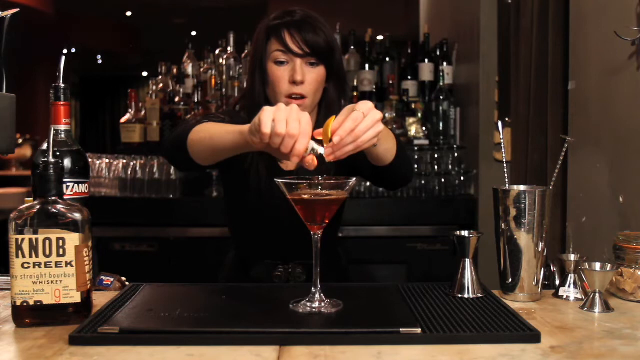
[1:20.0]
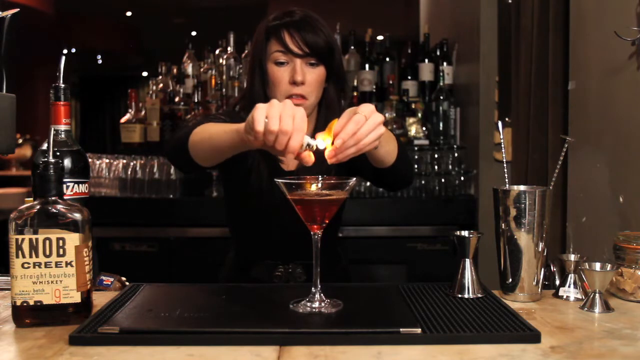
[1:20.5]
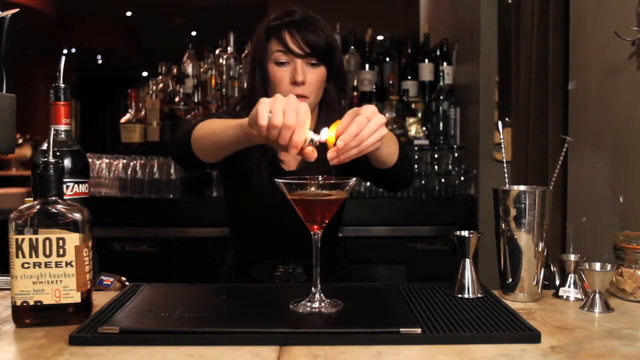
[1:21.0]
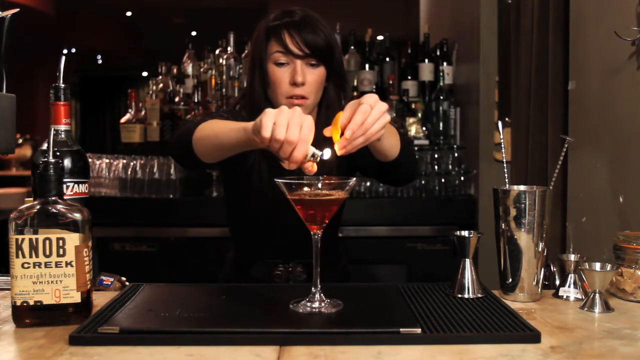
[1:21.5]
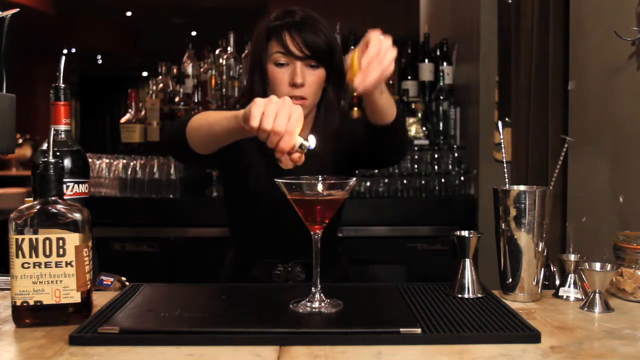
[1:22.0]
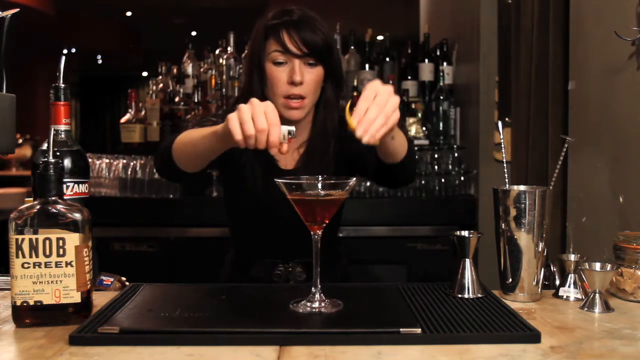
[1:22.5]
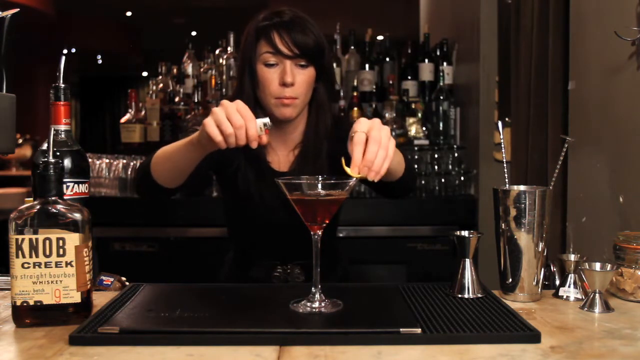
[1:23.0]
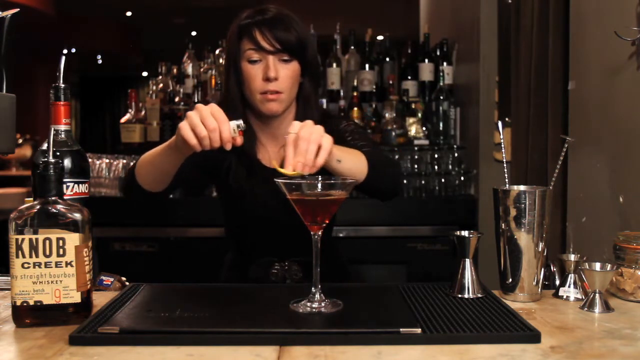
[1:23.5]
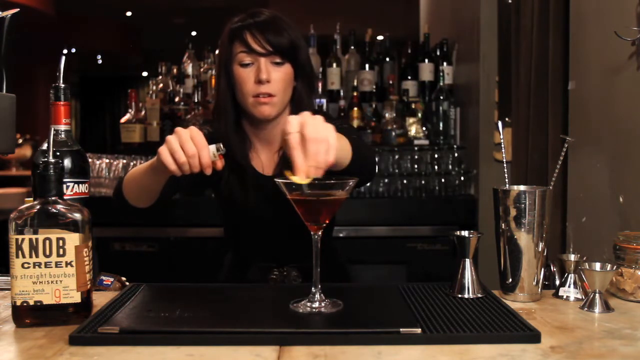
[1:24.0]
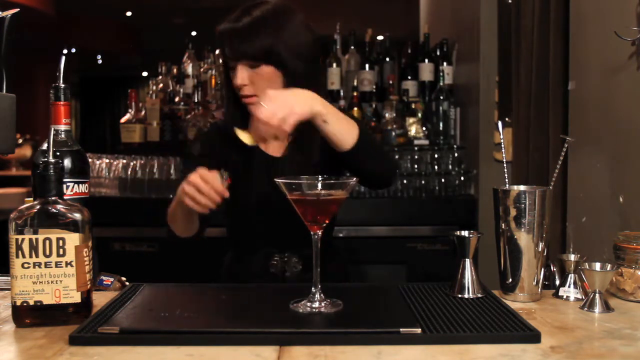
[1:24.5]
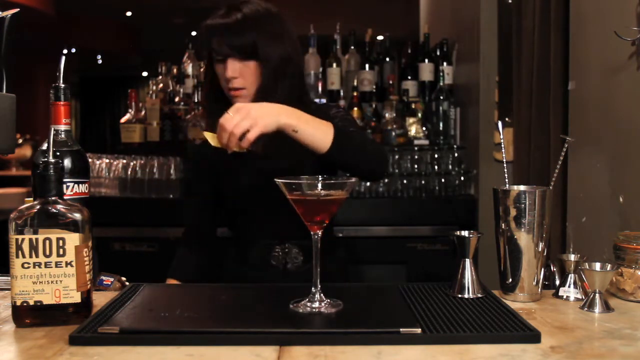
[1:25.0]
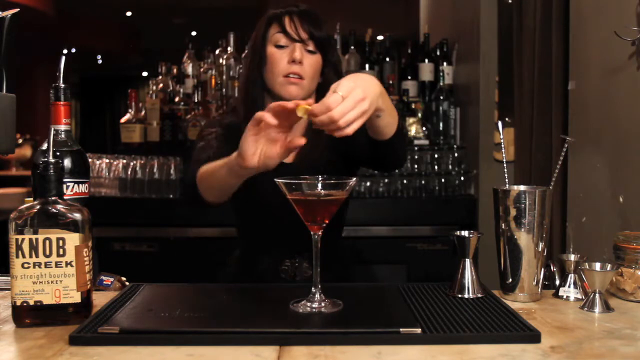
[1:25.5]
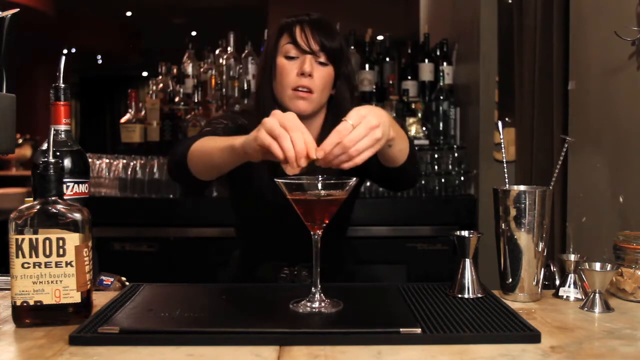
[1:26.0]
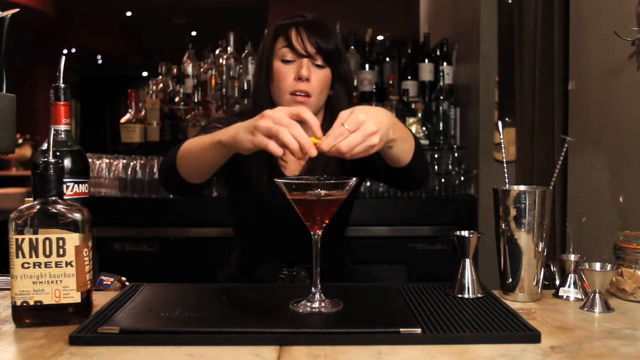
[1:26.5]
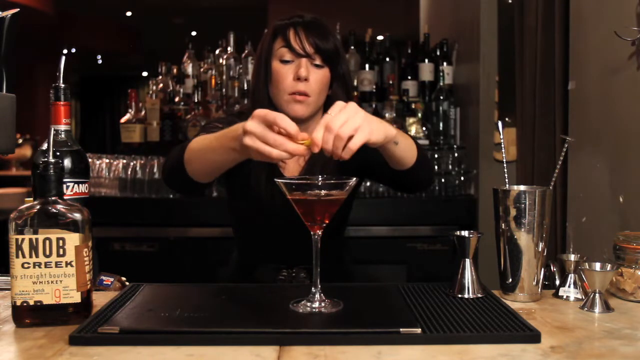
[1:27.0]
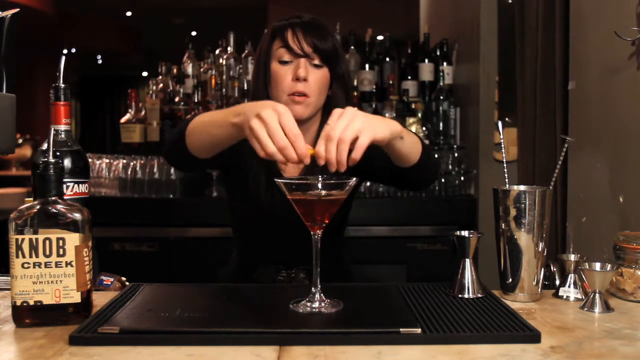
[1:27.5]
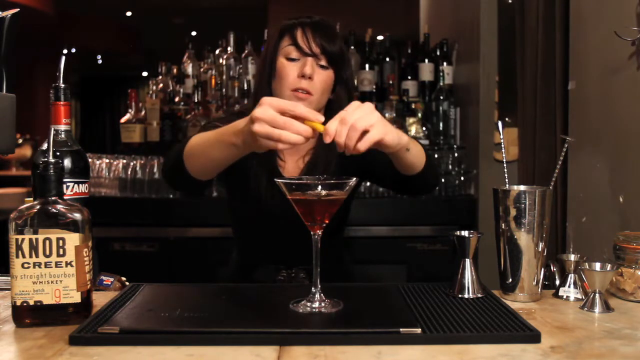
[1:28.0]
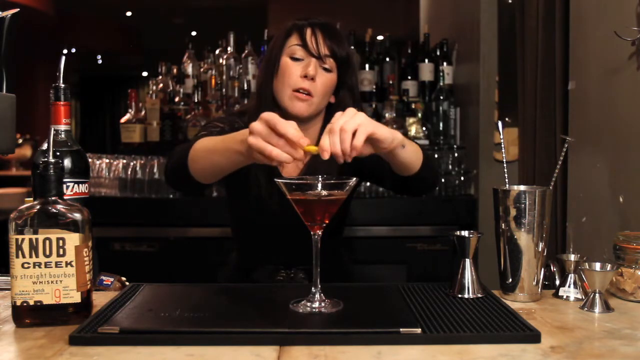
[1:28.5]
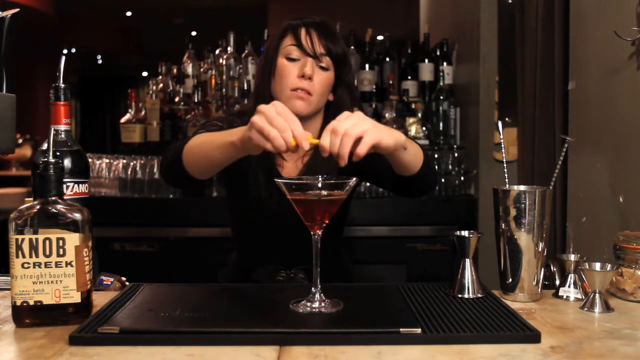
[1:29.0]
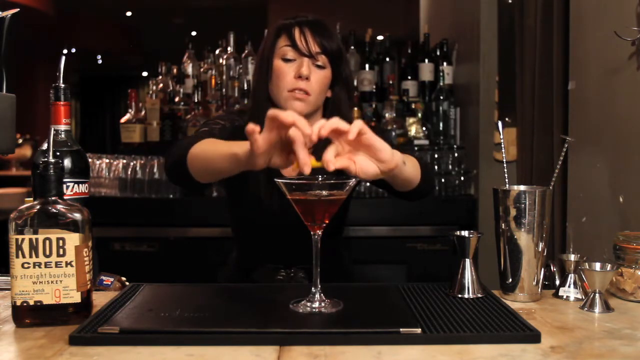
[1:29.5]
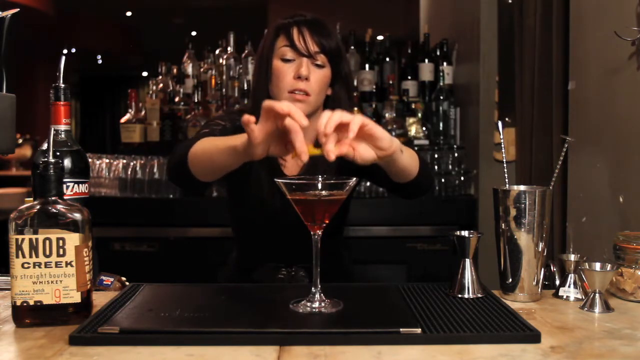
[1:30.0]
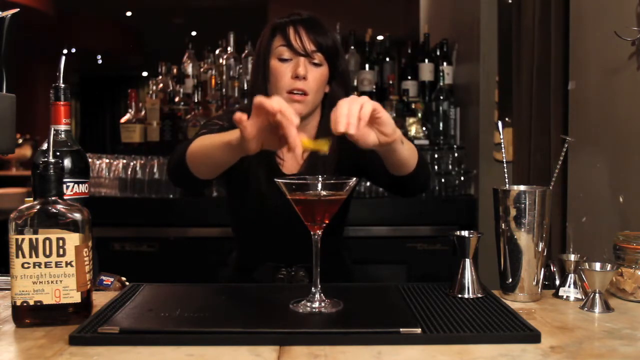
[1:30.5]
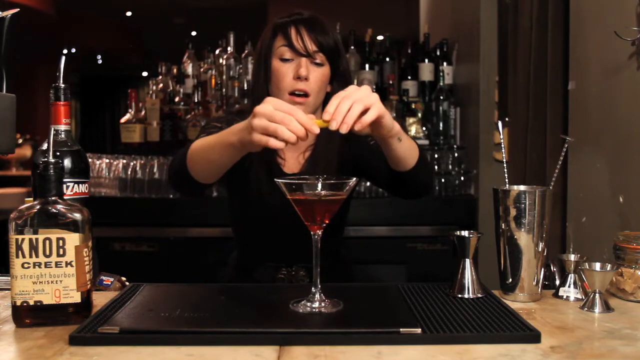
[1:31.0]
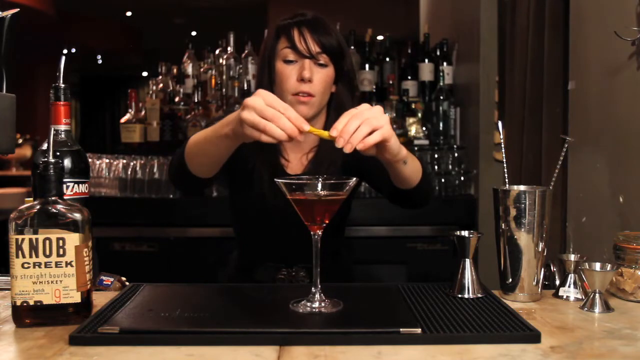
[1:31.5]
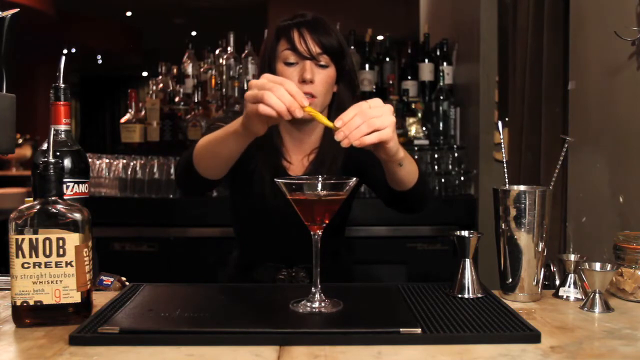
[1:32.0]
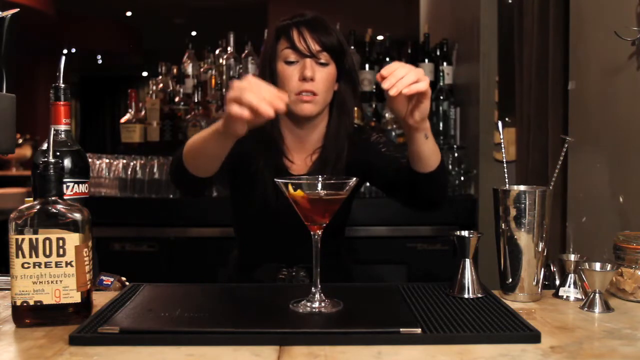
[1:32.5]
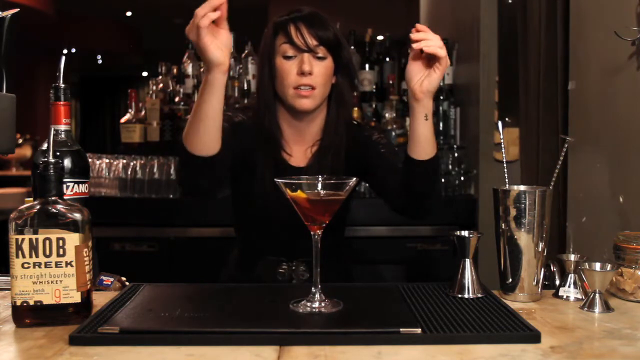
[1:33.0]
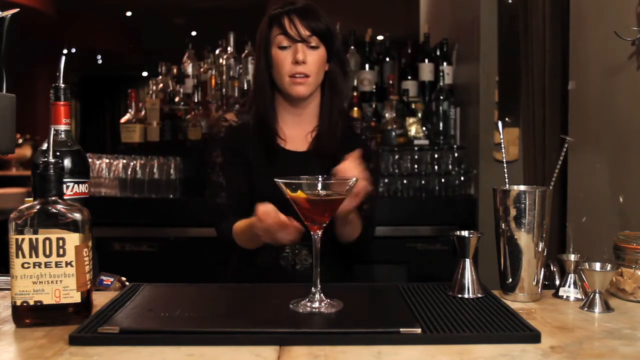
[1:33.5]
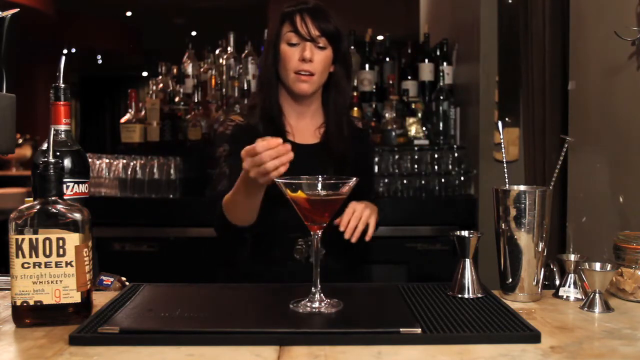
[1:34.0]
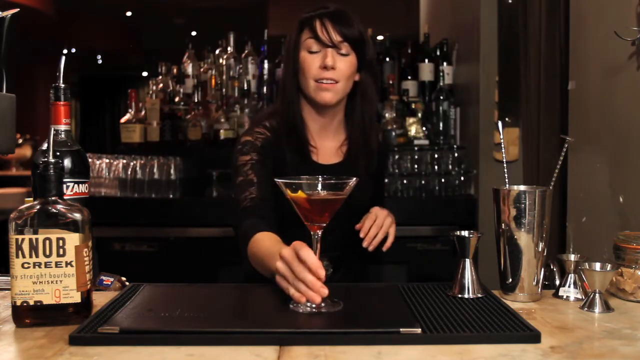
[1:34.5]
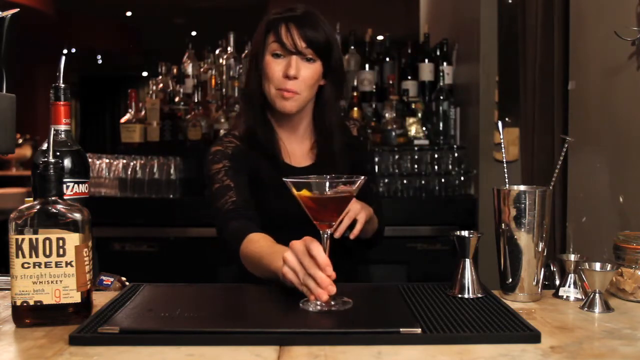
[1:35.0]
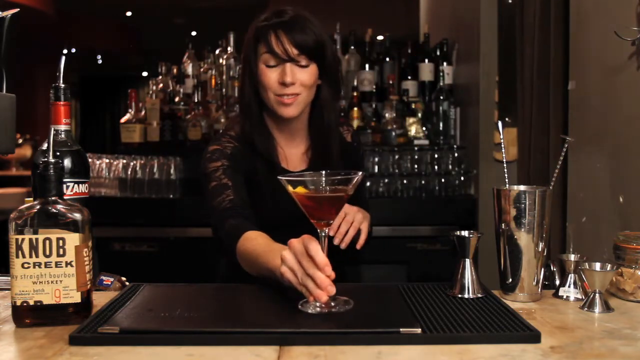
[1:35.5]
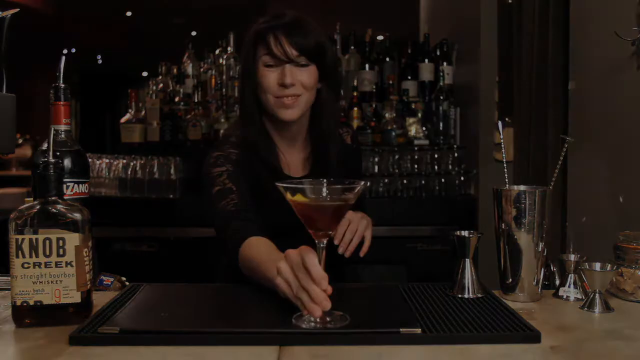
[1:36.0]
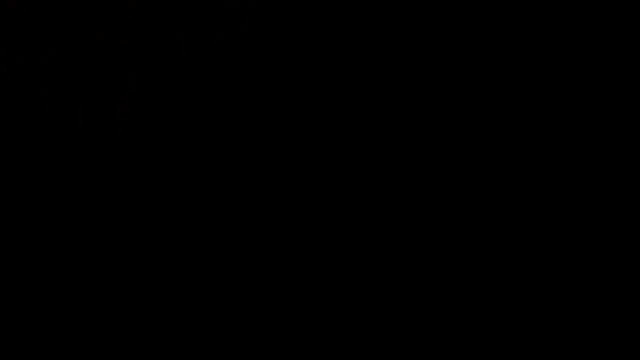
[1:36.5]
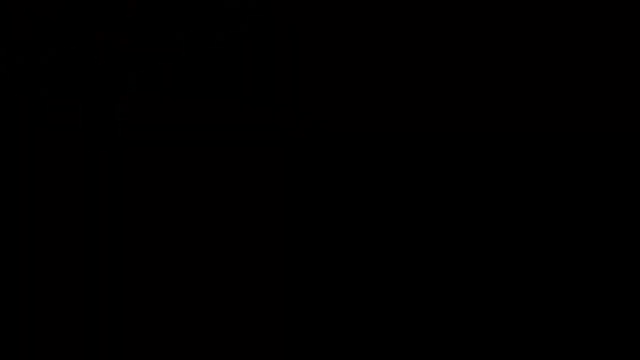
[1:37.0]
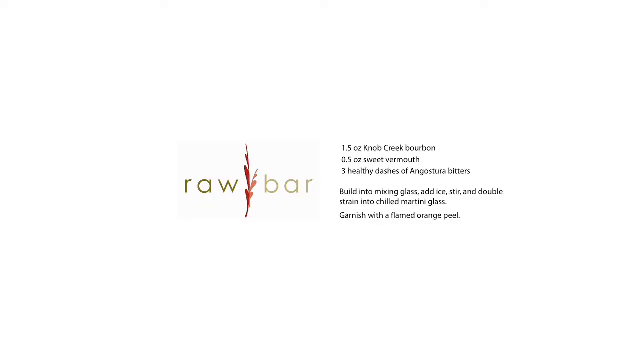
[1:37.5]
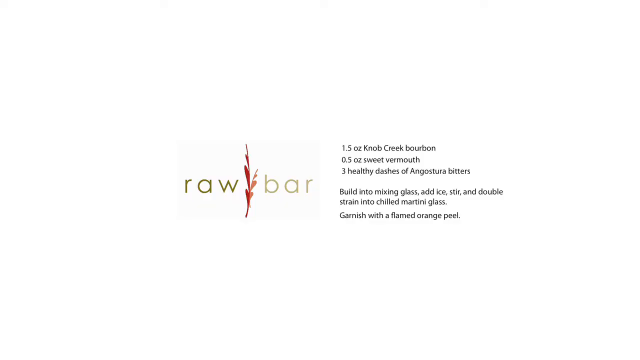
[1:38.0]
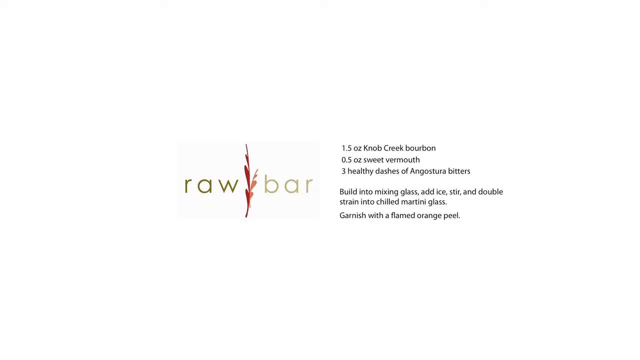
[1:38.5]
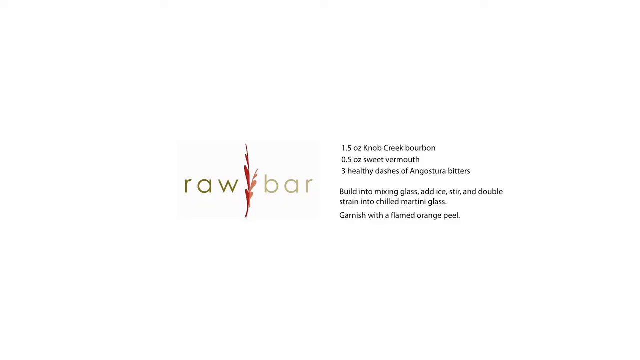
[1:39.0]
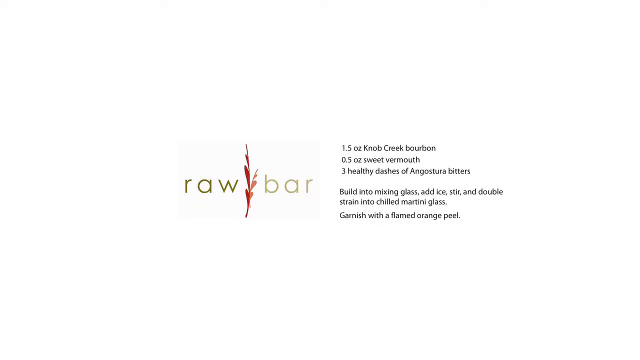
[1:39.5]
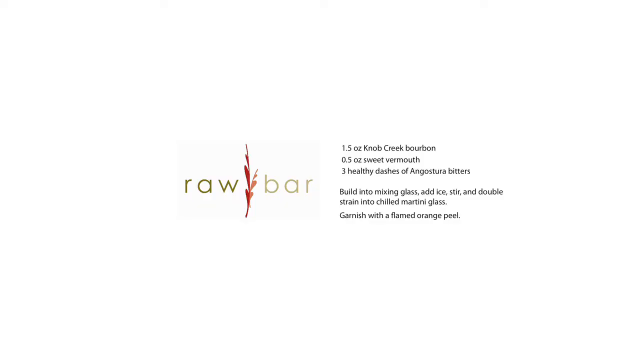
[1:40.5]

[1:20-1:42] The woman rubs the flame from the lighter on the lemon peel, then drops the peel on top of the drink and rubs it around the edge of the rim of the martini glass. She twists the lemon peel up, apparently squeezes some juice off of it, and drops it into the drink. She puts her hand on the stem of the martini glass and smiles at the camera, presenting it. The video cuts to black and then to a white screen that says "raw bar" on the left side, along with the text "1.5 ounces of knob Greek bourbon", "0.5 ounce sweet vermouth", "three healthy dashes of Angostura bitters", and "build it to mixing glass add ice stir and double strain into chilled martini glass", "Garnish with a flamed orange peel".